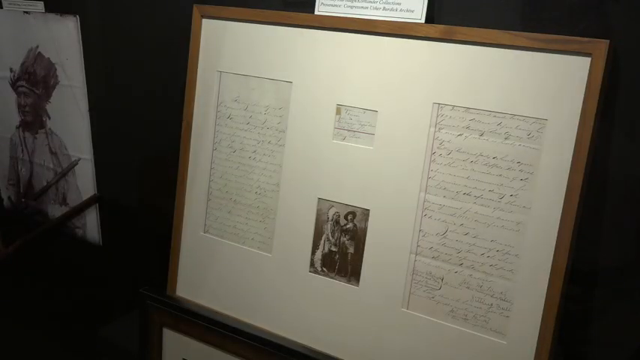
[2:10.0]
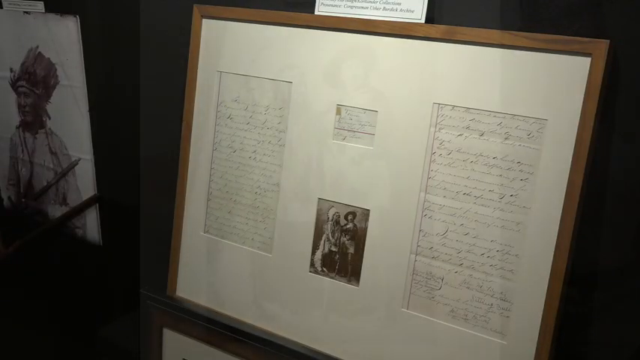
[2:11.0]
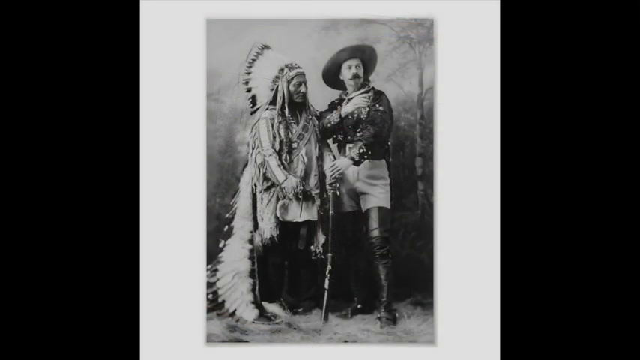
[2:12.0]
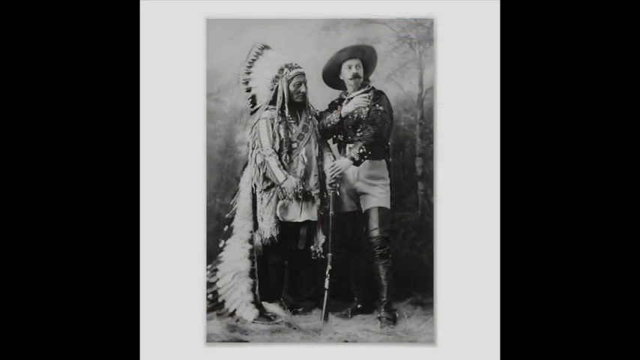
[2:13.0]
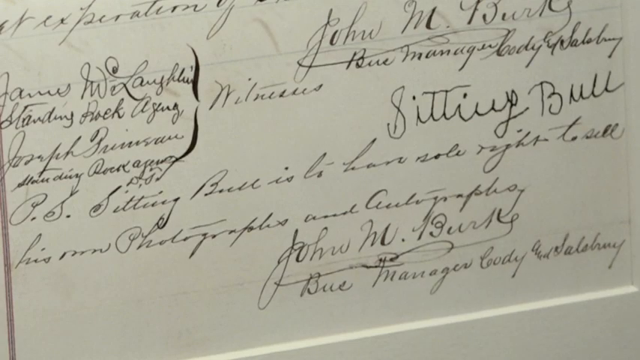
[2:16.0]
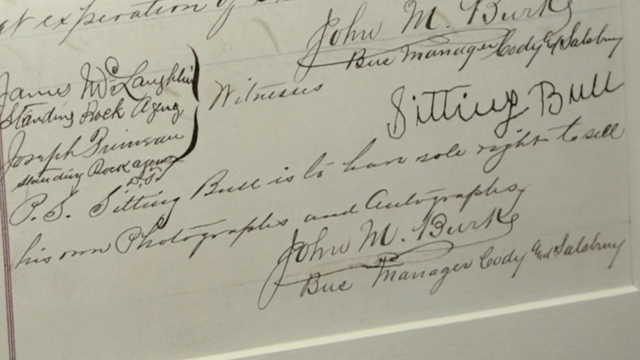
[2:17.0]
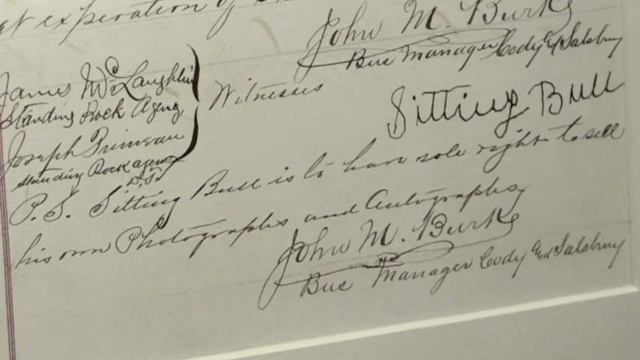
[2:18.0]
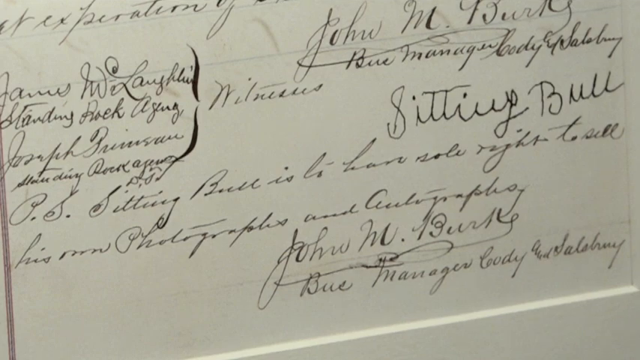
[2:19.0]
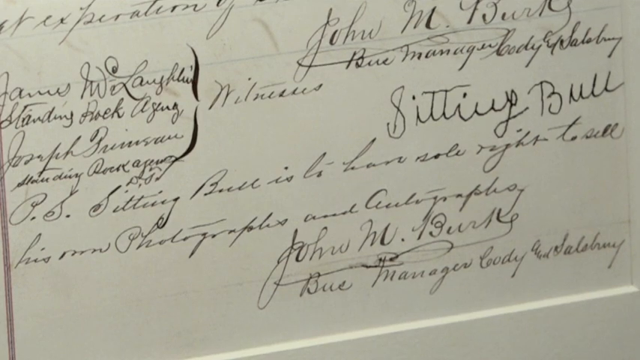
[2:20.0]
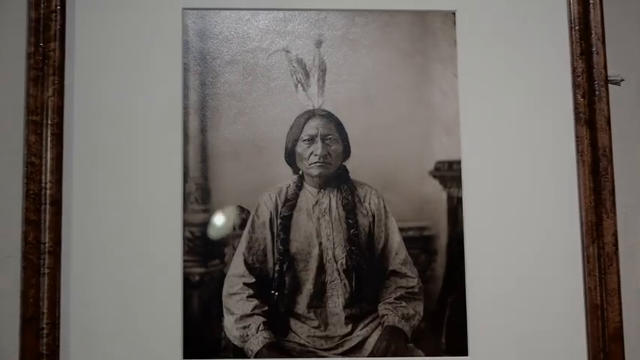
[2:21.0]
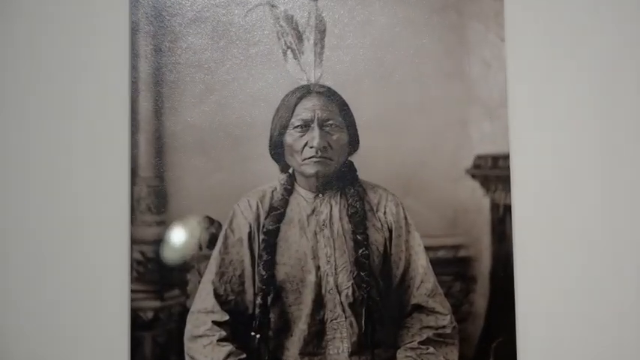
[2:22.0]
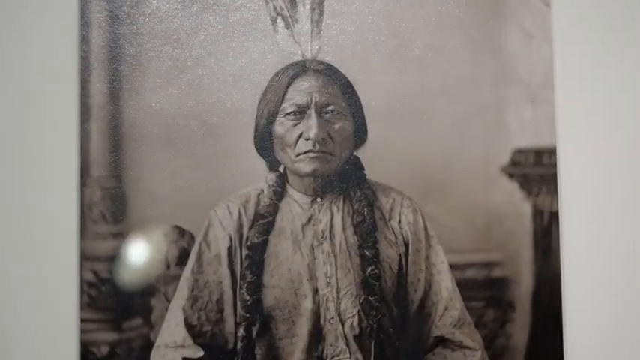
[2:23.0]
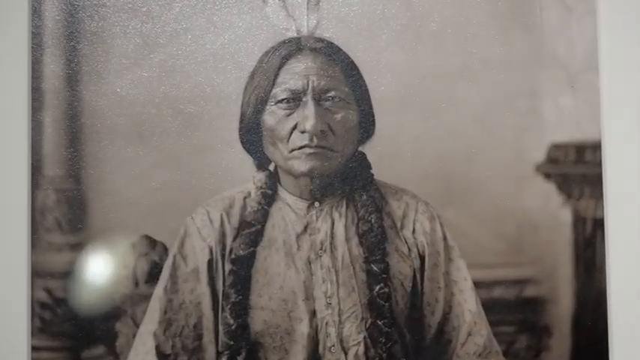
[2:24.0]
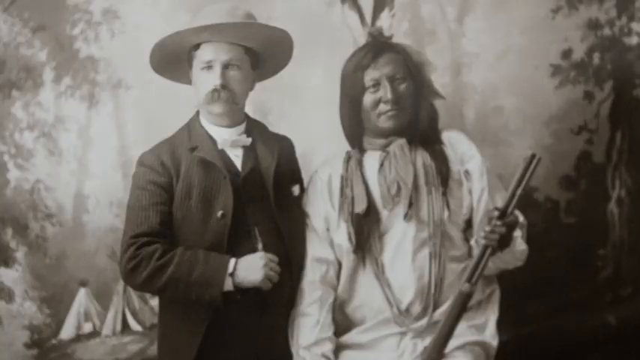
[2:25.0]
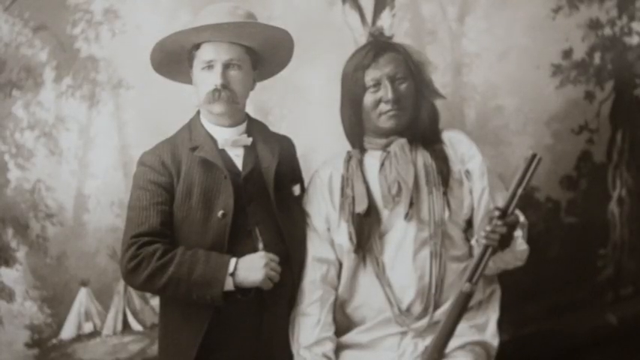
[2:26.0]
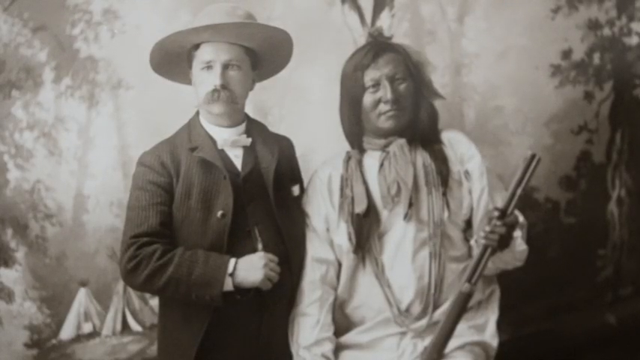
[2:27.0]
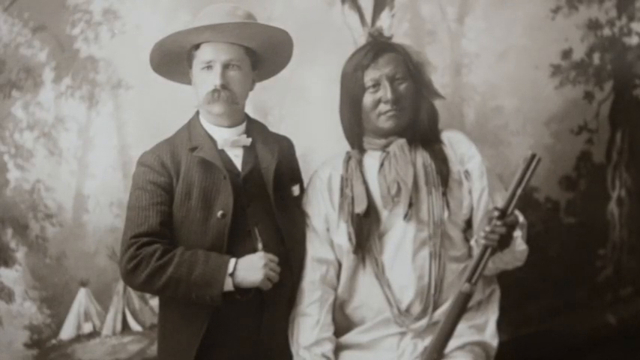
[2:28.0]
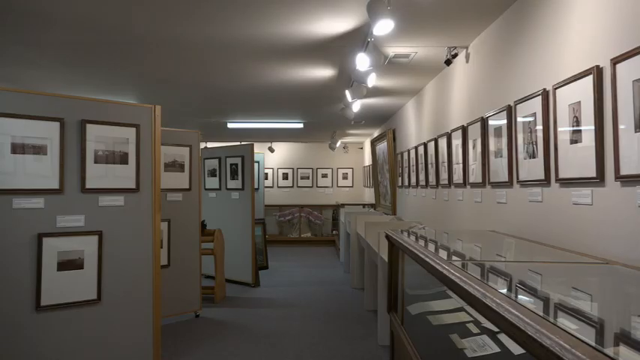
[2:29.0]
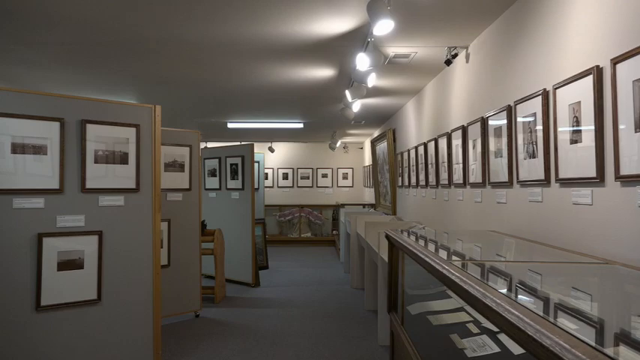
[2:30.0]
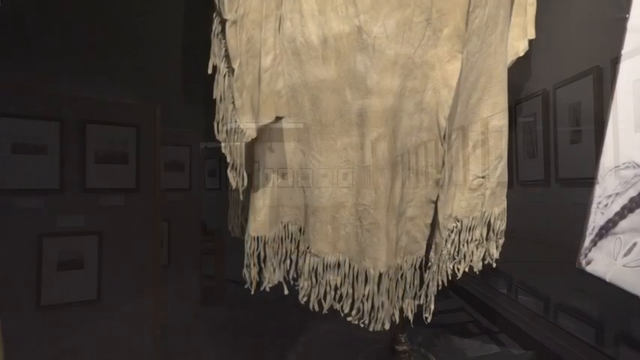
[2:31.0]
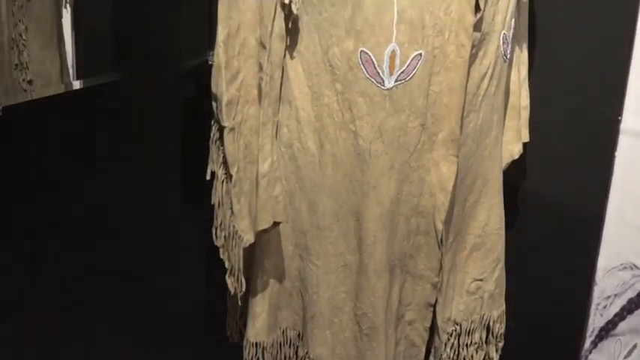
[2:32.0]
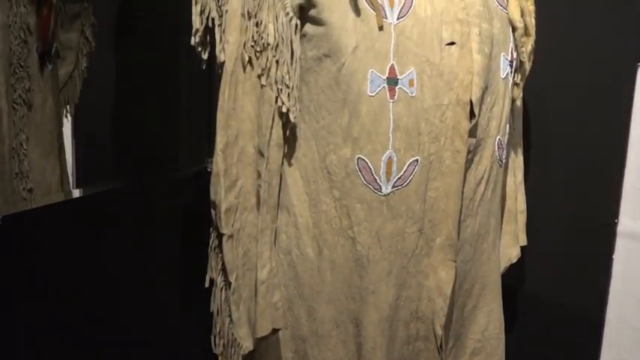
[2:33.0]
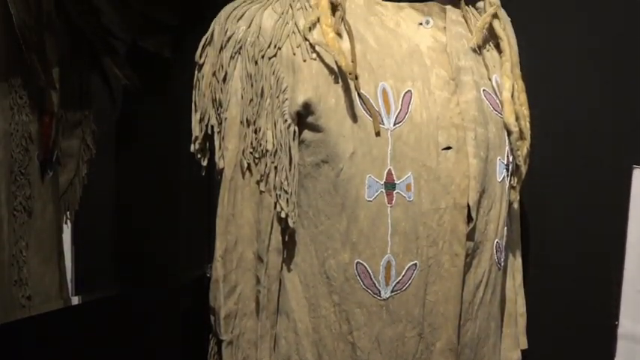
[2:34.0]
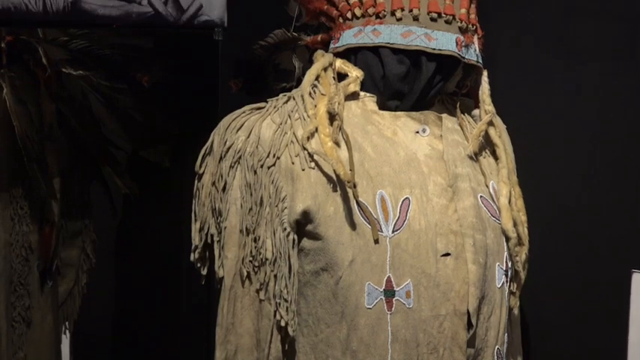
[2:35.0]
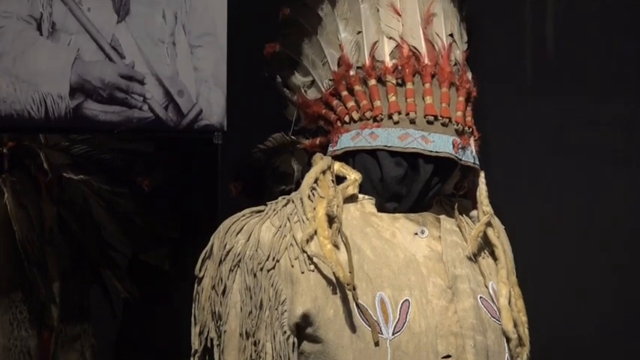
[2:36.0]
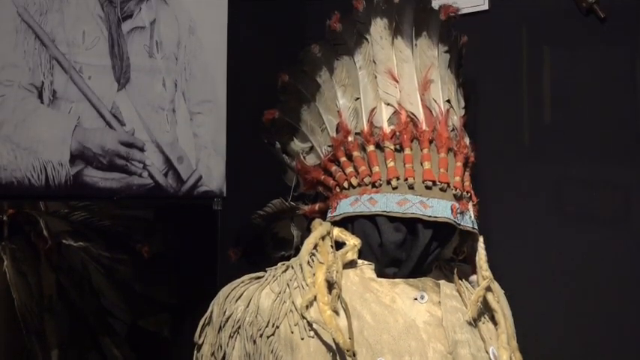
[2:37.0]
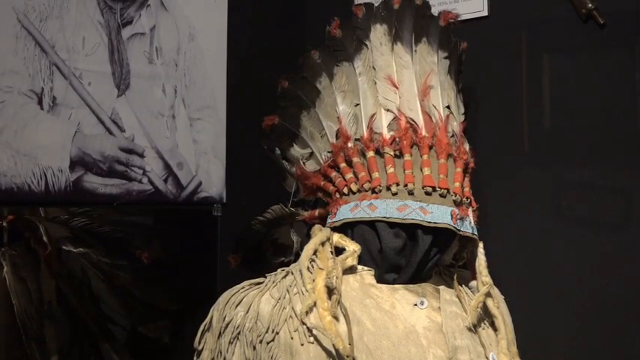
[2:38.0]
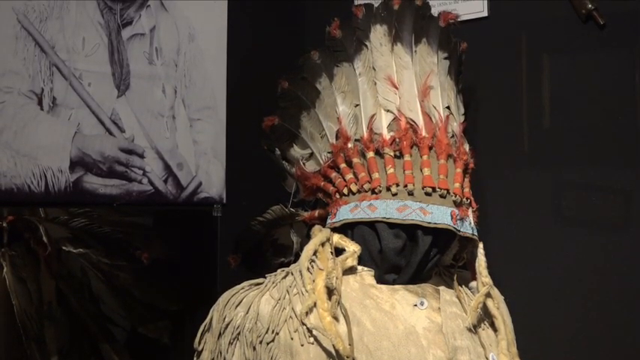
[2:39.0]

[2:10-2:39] A picture frame holds a very small black and white picture of what looks to be a couple posing, with what look like handwritten messages in cursive on either side. The camera zooms into the picture frame, which shows a Native American person next to a person dressed in cowboy attire who looks to be of white, Caucasian ethnicity. A zoomed-in view shows one of the handwritten messages from the side of the frame. Next is a black and white picture of a Native American man with long hair posing, then a different black and white picture of a white man next to a Native American person. A picture of an indoor building with several picture frames hung on the wall follows. Finally, the video ends with Native American attire from head to toe that looks very old; the headgear has white feathers on it.